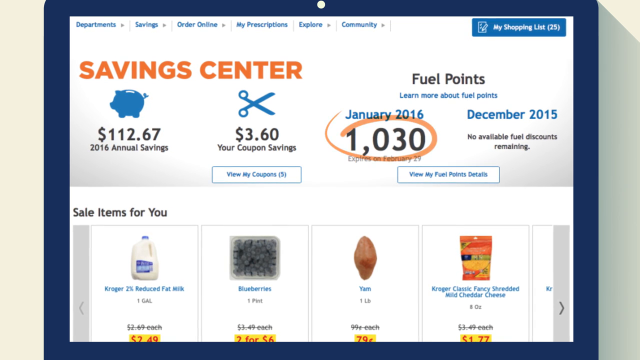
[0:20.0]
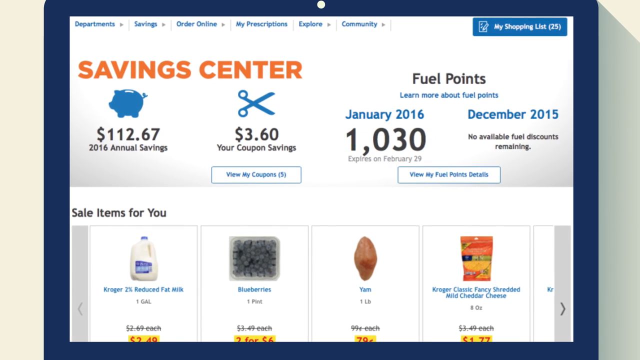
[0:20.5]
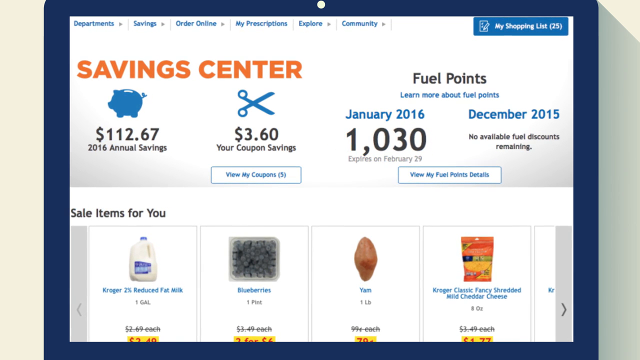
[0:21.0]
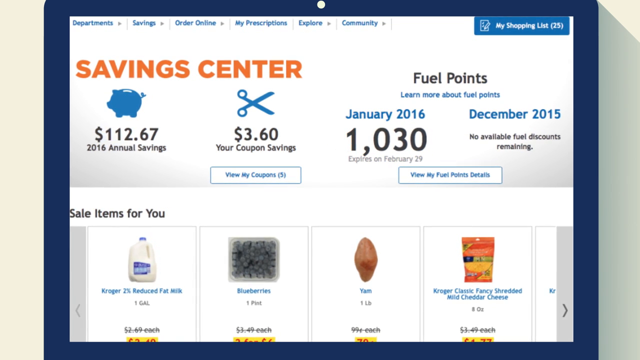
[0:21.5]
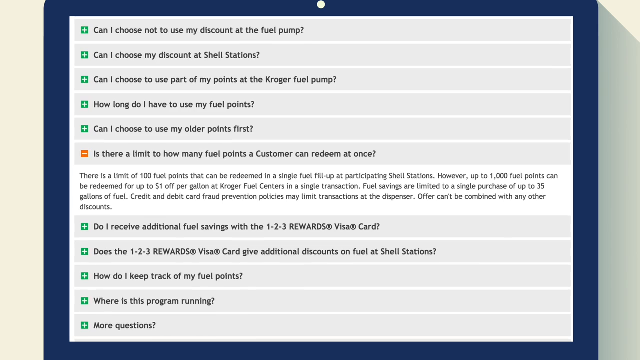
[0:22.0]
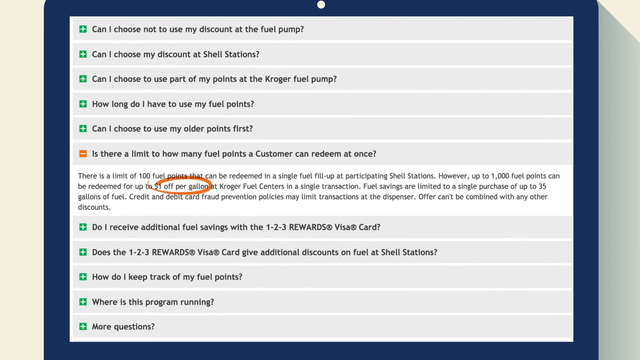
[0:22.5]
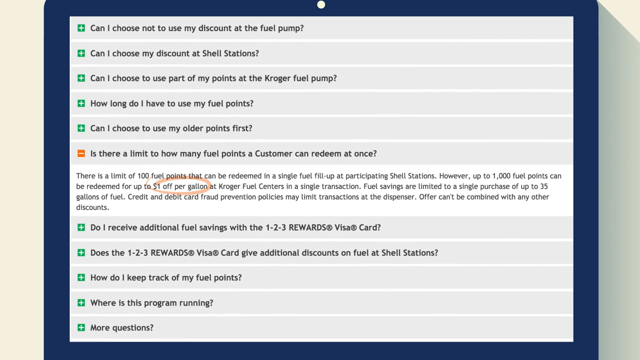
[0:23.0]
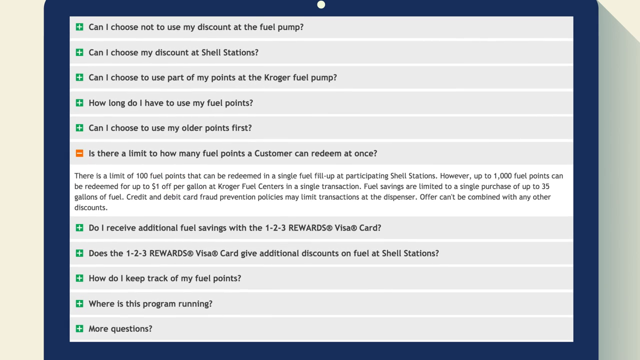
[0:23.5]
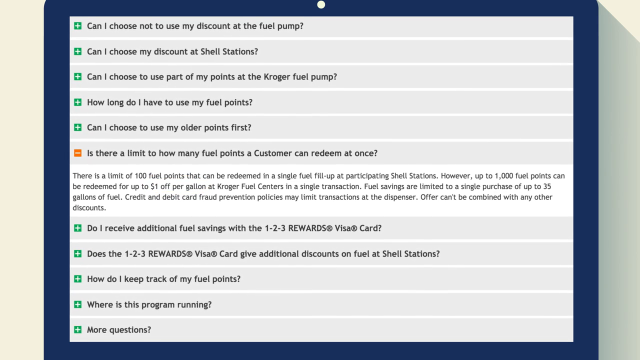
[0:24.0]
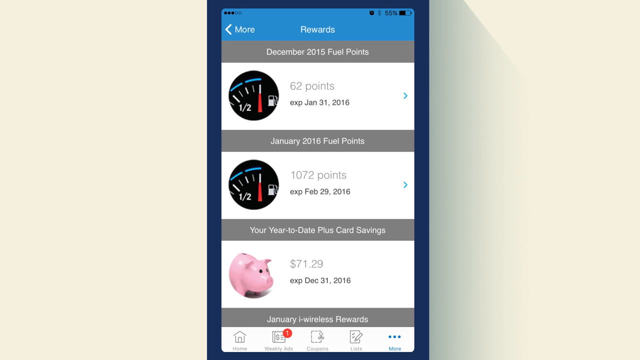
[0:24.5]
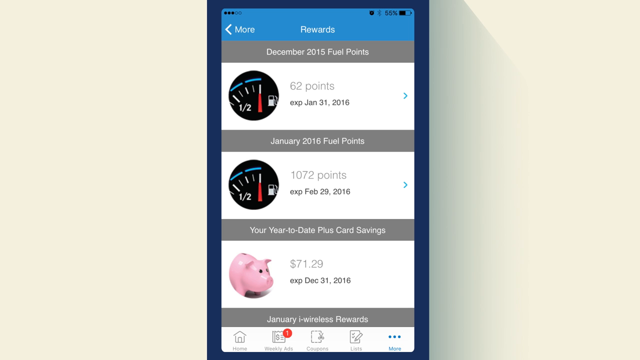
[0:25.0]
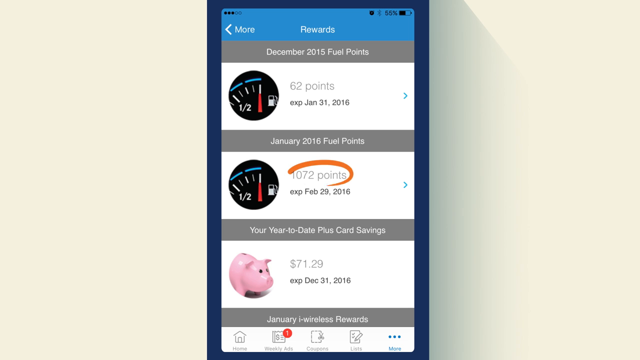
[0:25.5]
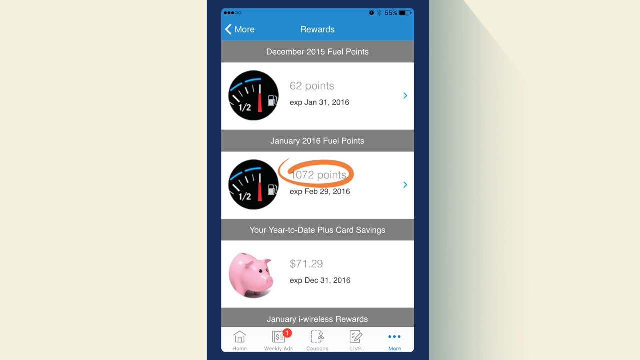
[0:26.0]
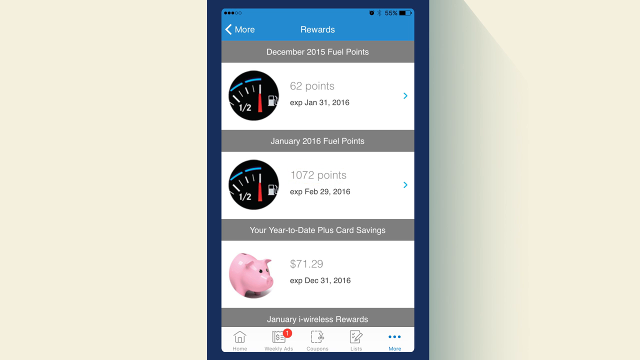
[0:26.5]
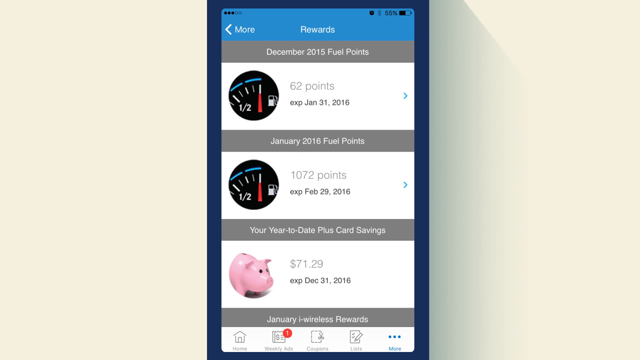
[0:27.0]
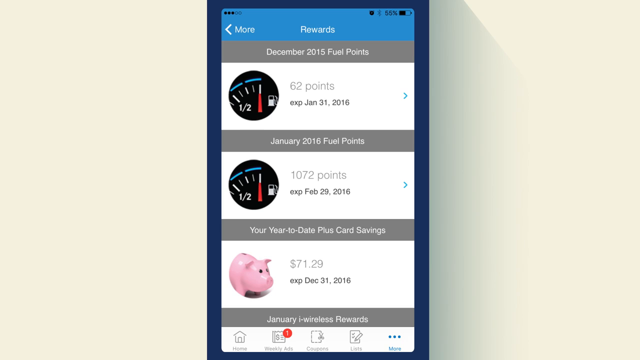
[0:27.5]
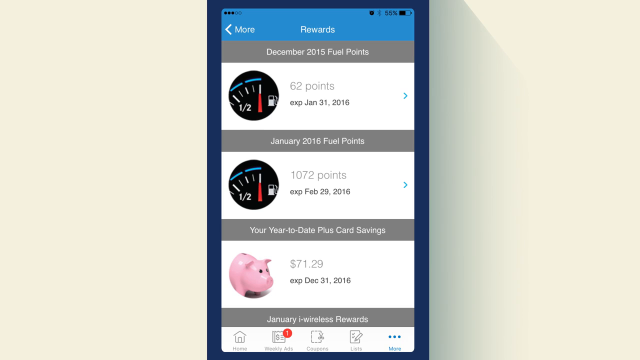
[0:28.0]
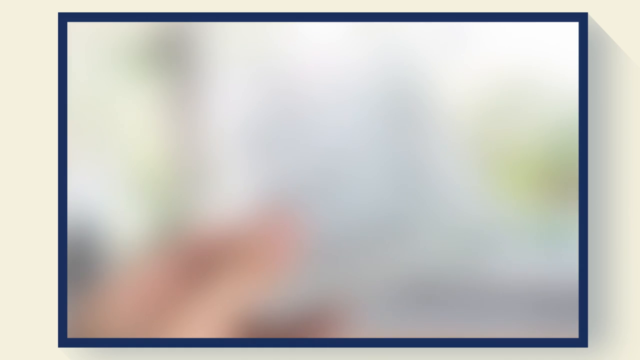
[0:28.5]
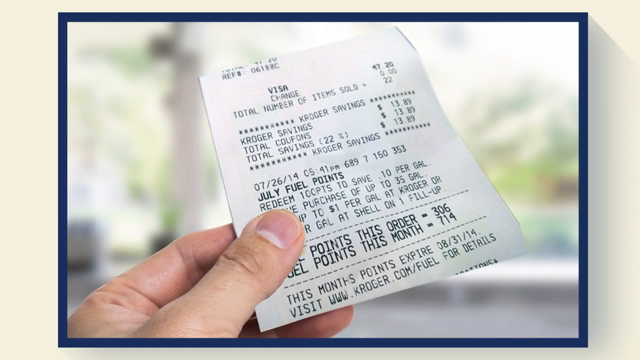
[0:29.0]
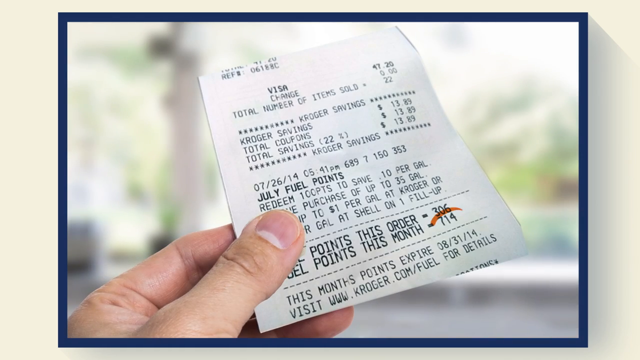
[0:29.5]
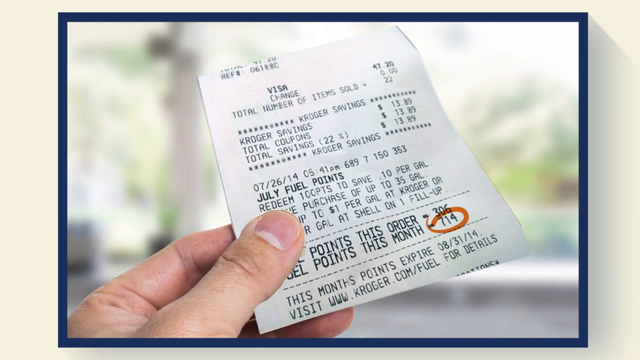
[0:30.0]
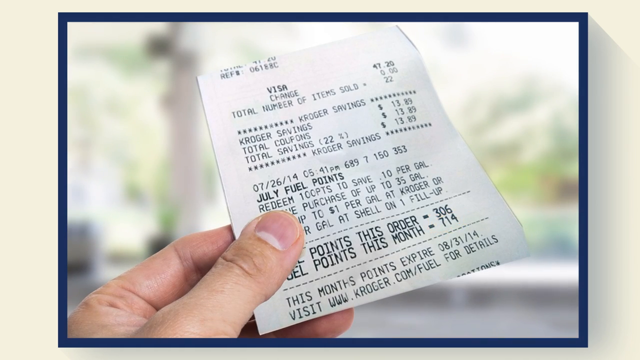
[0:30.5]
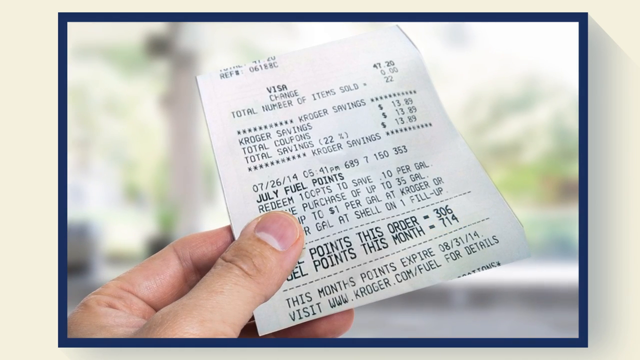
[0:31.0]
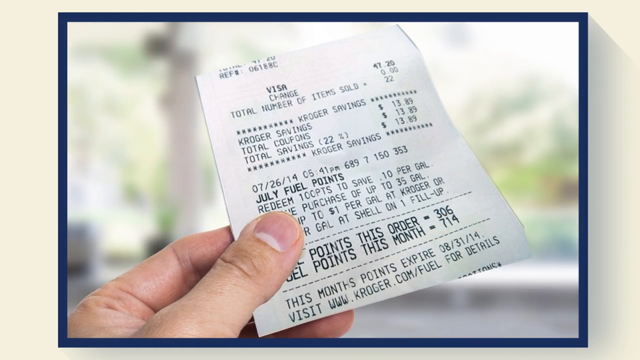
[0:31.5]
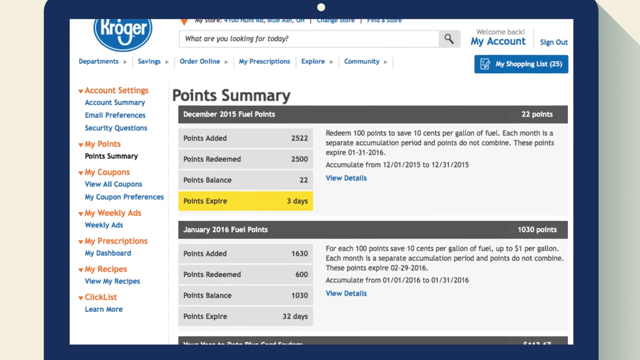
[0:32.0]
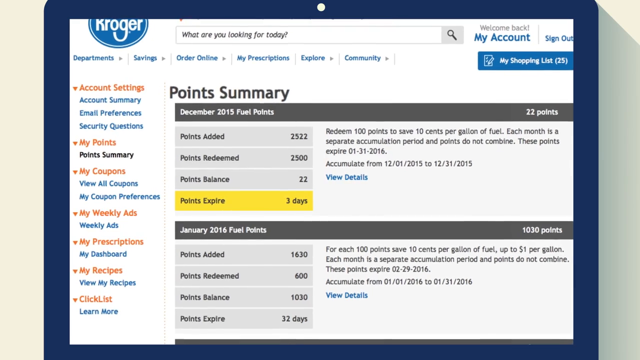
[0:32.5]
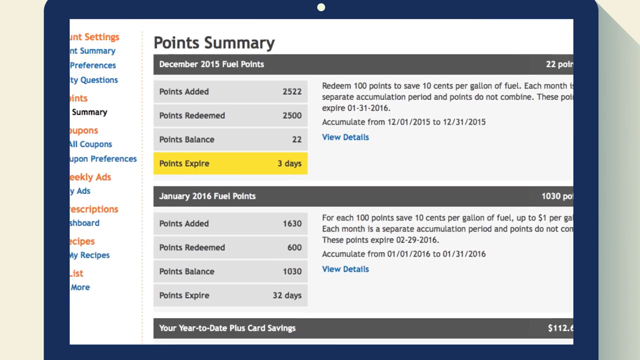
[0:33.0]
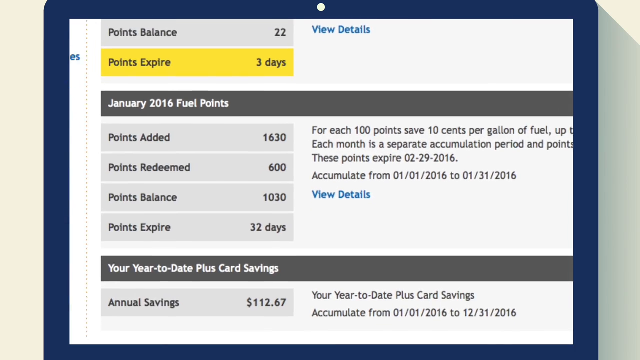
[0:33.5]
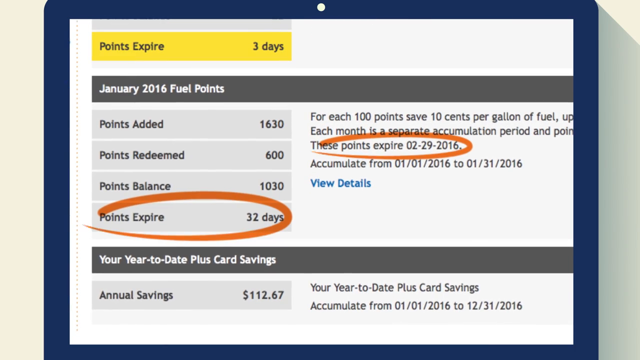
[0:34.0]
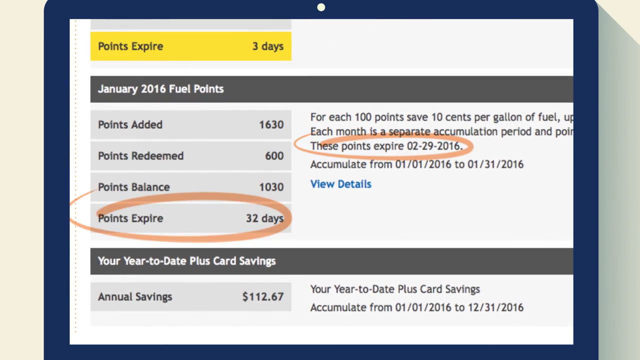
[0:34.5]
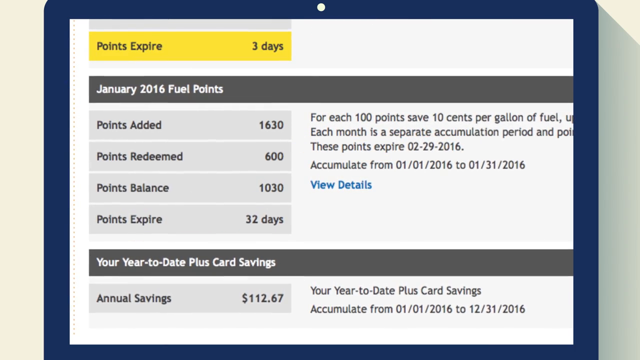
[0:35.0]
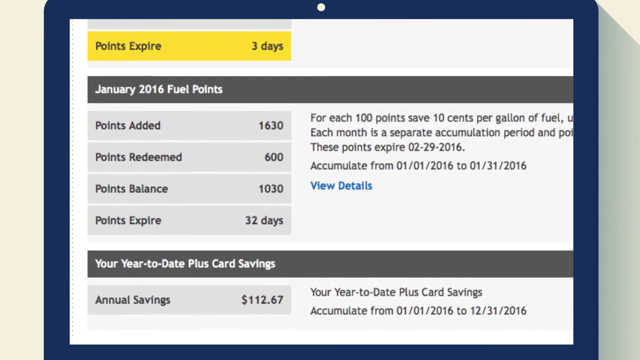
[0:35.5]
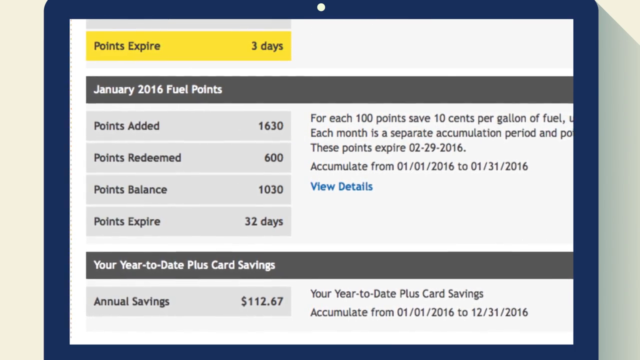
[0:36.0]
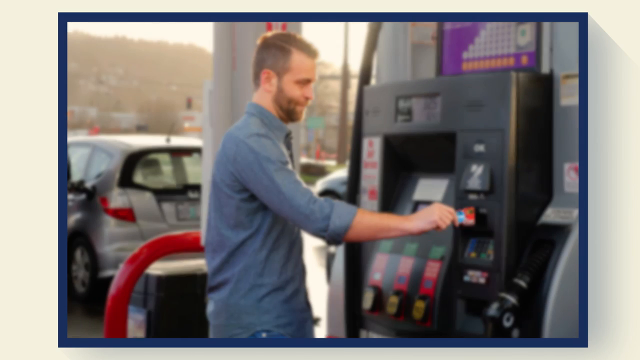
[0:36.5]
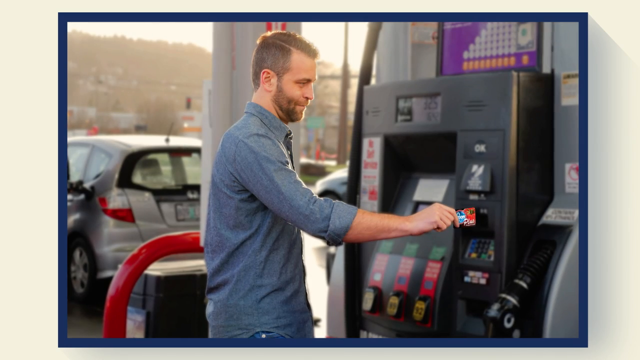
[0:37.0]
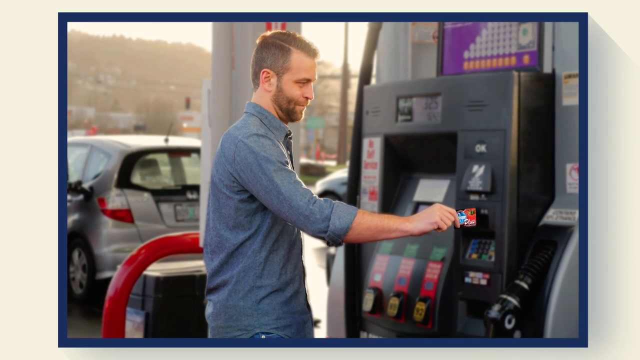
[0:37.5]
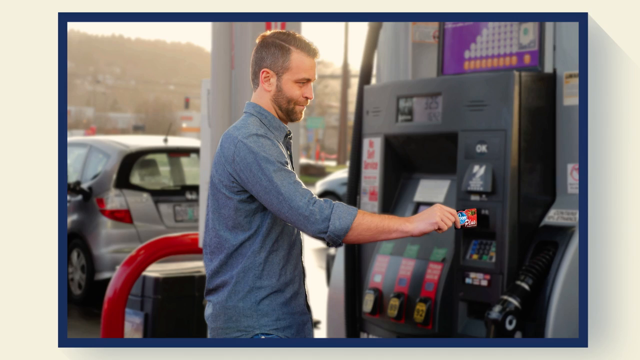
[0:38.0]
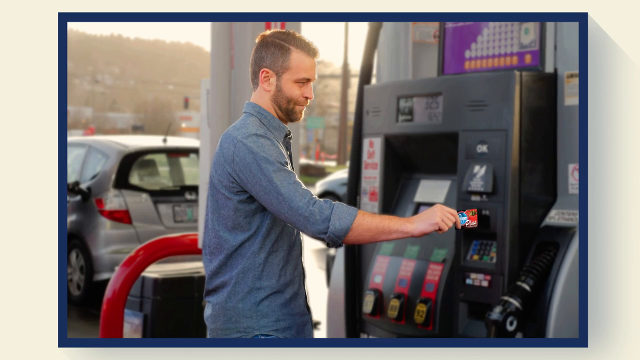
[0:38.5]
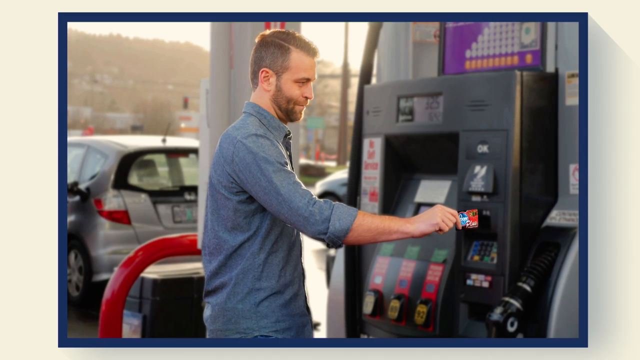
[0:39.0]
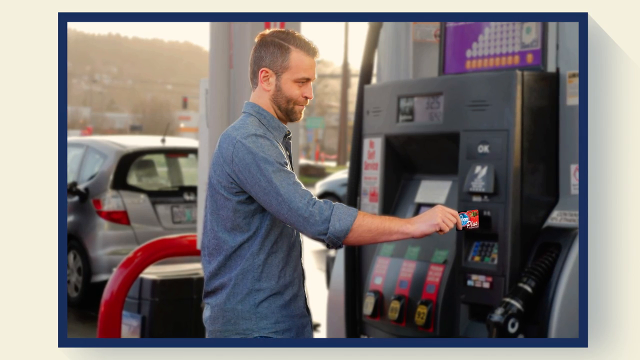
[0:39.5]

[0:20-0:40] The video shows how a grocery store membership plus program works: spending on groceries or prescriptions earns fuel points. Frequently asked questions are presented, such as whether the discount can be declined at the fuel pump, whether the discount can be used at Shell stations, and whether part of the points can be used at the Kroger fuel pump. An app for managing the points is shown; on screen it displays rewards, with 62 points for fuel that expire by January 31st, 2016, as well as the amount of money saved to date. A colour photograph of a printed Kroger receipt also appears, showing the points gained this month or on the order.